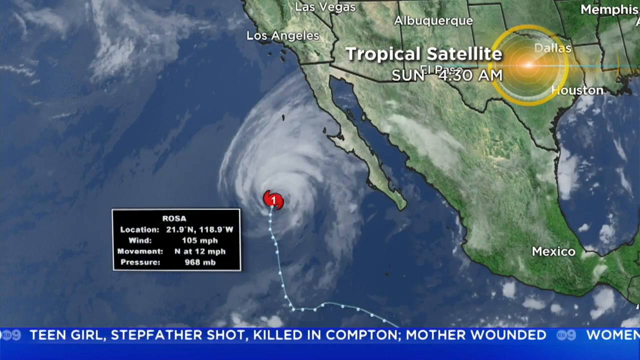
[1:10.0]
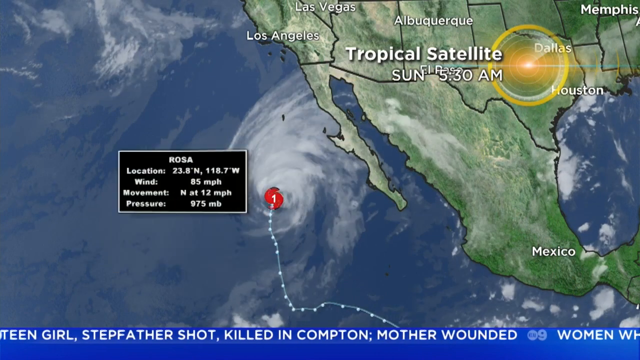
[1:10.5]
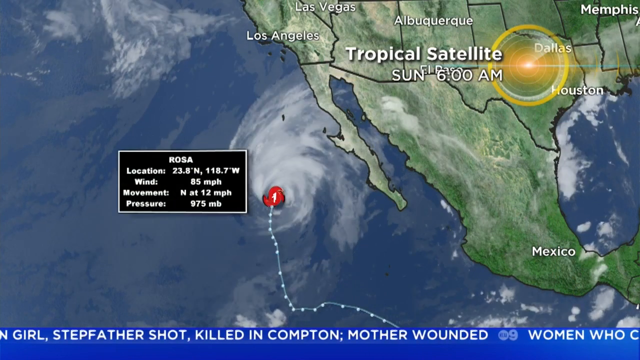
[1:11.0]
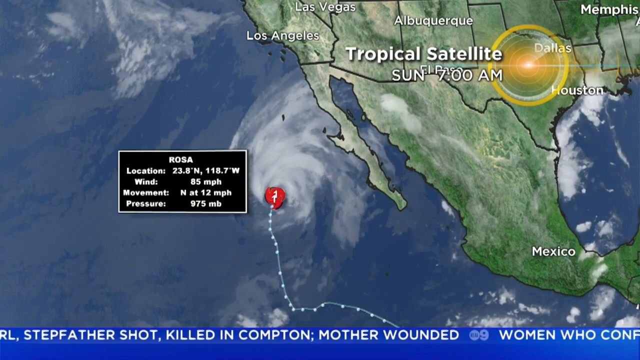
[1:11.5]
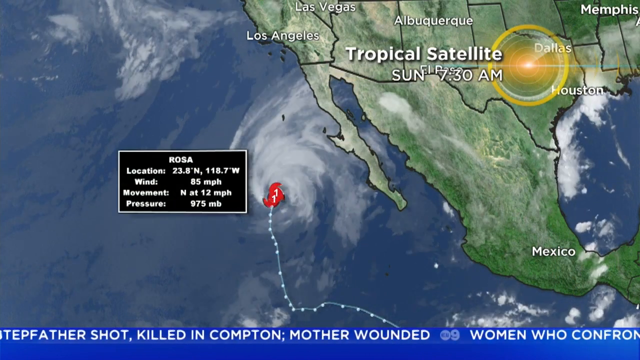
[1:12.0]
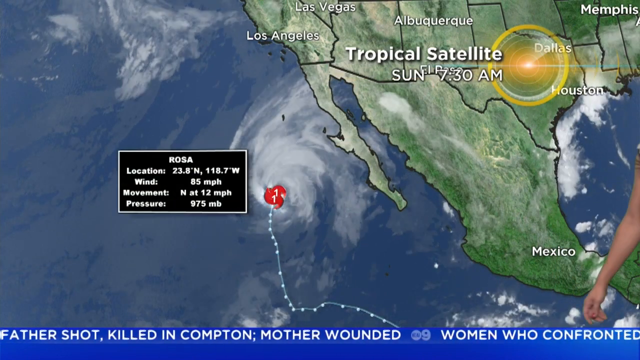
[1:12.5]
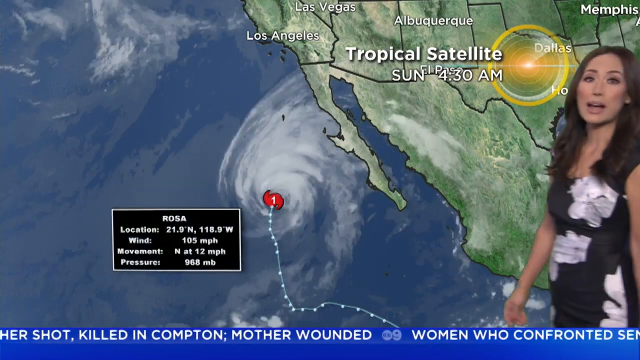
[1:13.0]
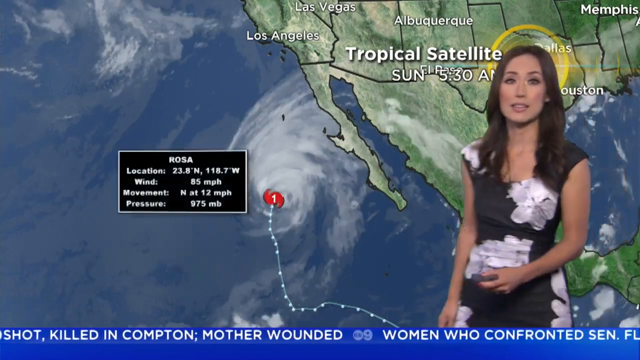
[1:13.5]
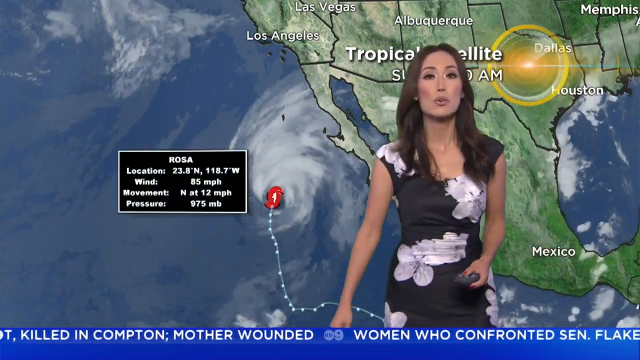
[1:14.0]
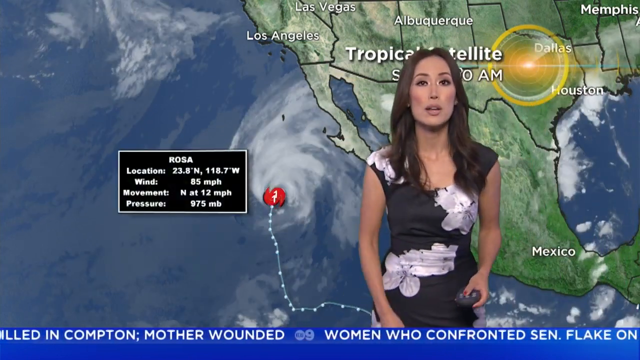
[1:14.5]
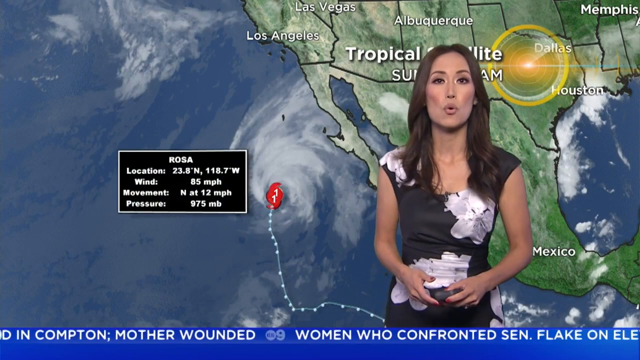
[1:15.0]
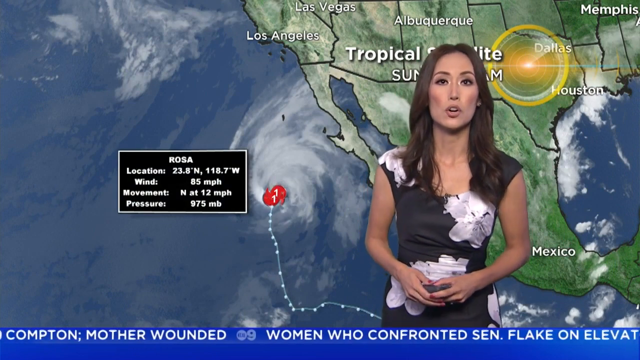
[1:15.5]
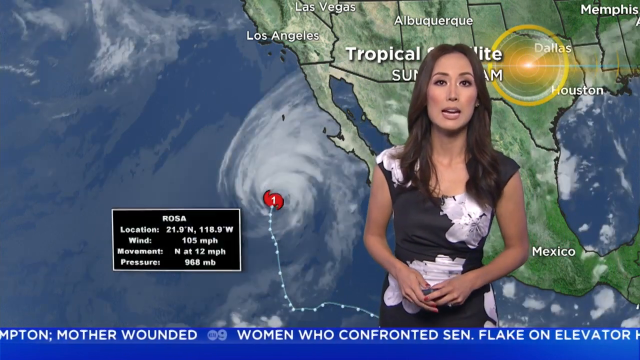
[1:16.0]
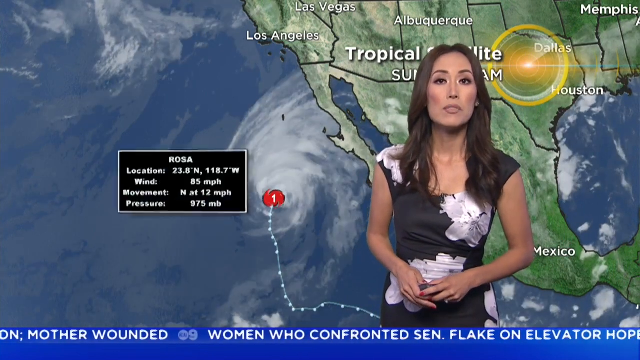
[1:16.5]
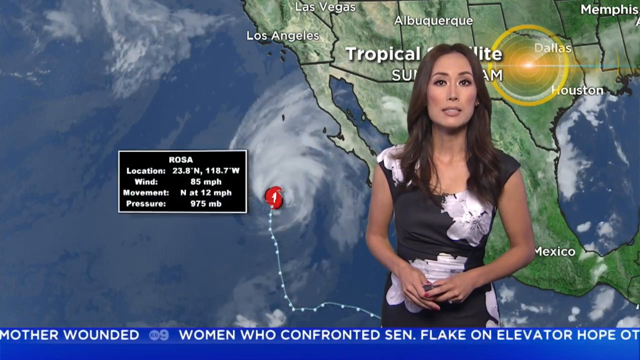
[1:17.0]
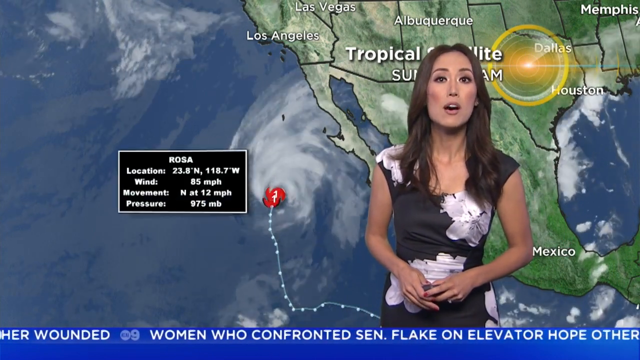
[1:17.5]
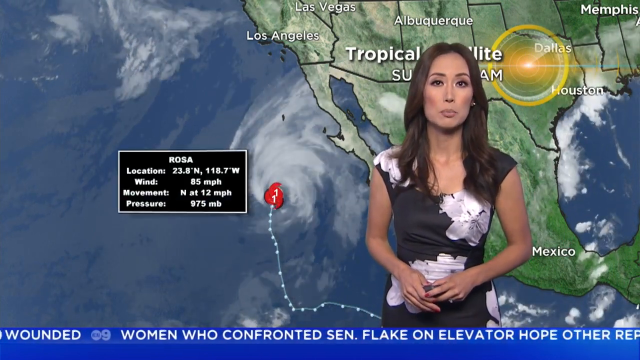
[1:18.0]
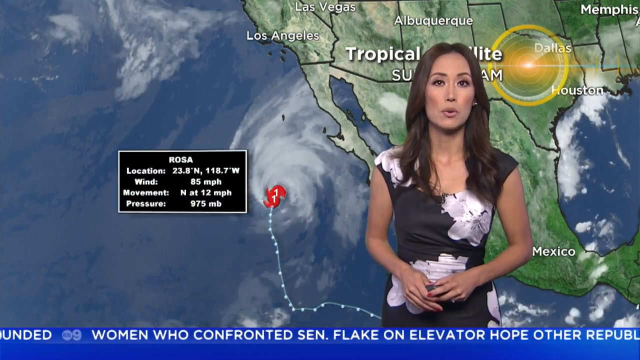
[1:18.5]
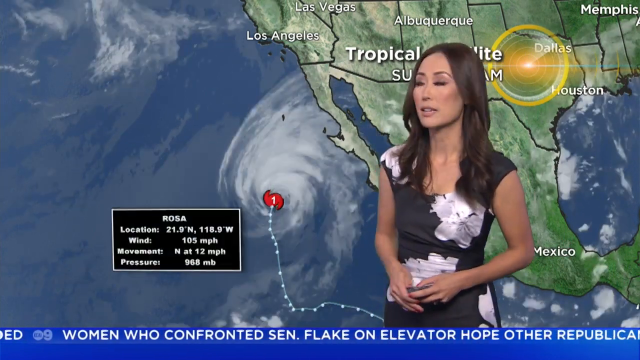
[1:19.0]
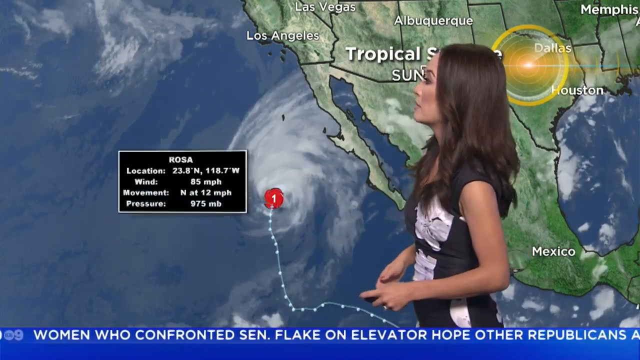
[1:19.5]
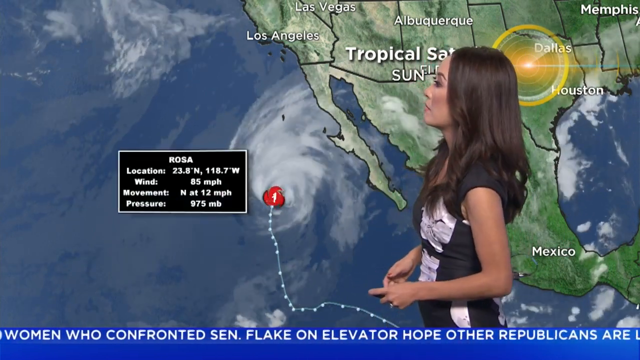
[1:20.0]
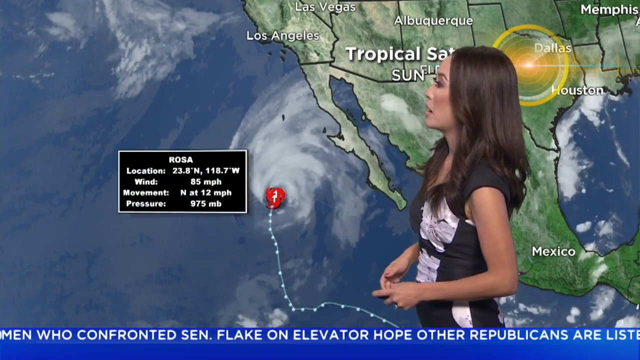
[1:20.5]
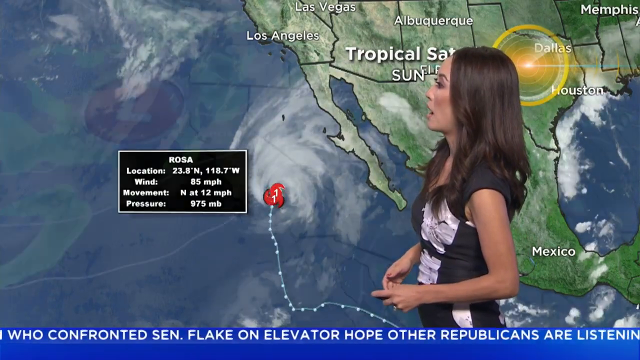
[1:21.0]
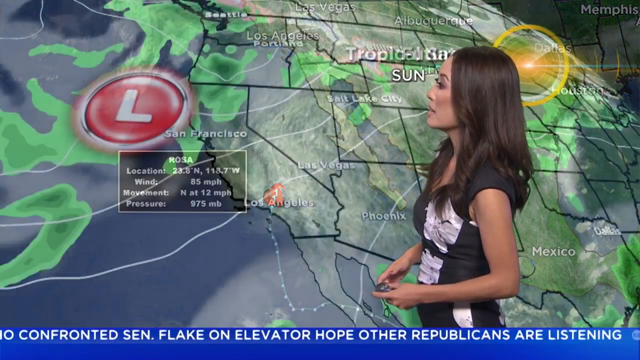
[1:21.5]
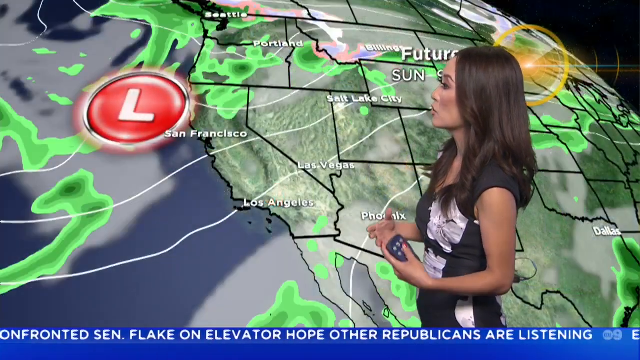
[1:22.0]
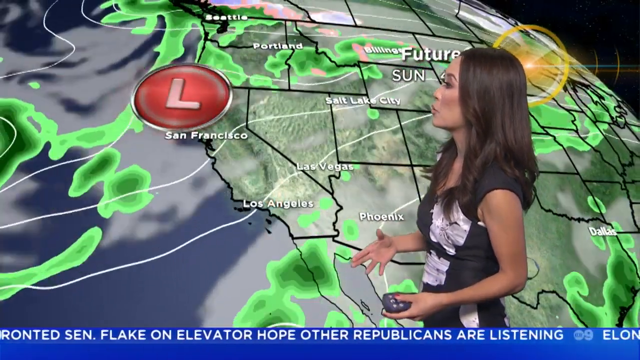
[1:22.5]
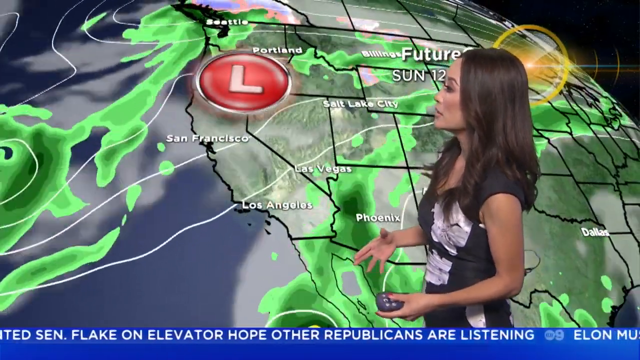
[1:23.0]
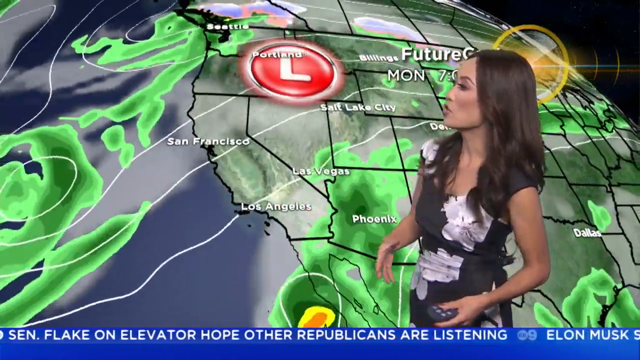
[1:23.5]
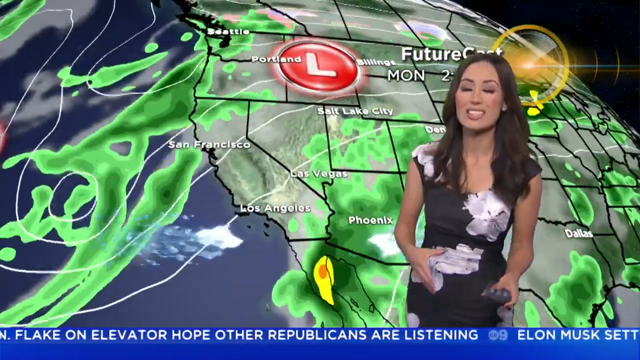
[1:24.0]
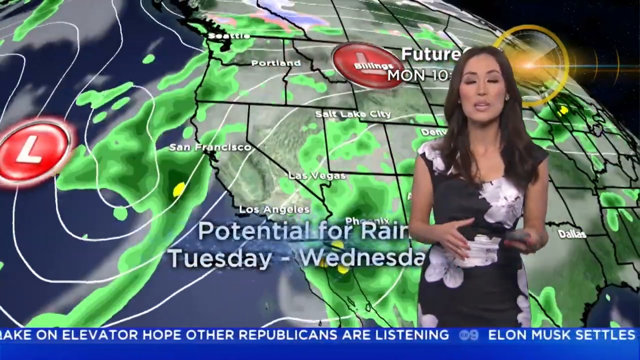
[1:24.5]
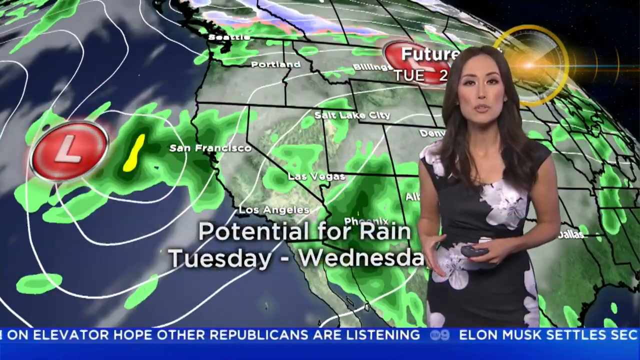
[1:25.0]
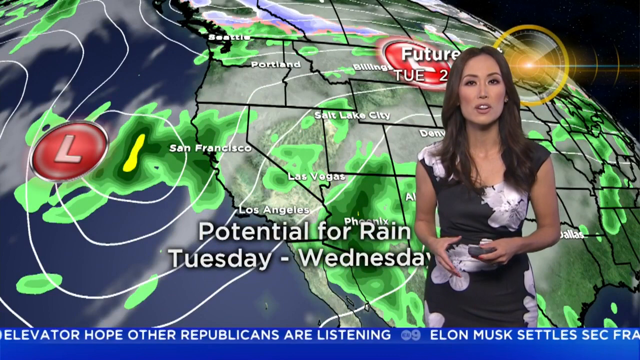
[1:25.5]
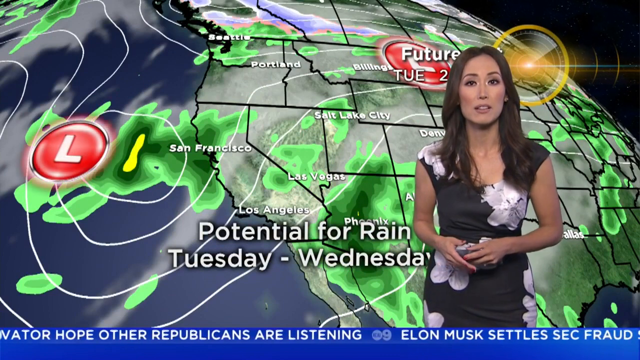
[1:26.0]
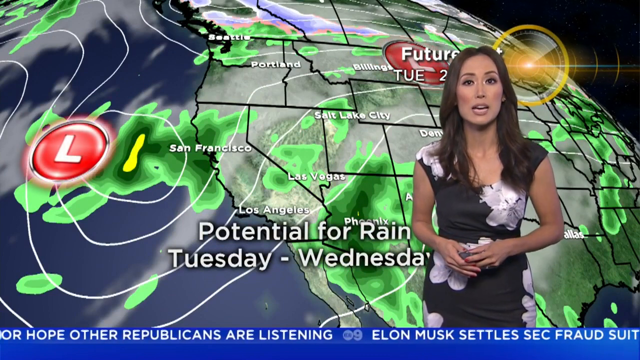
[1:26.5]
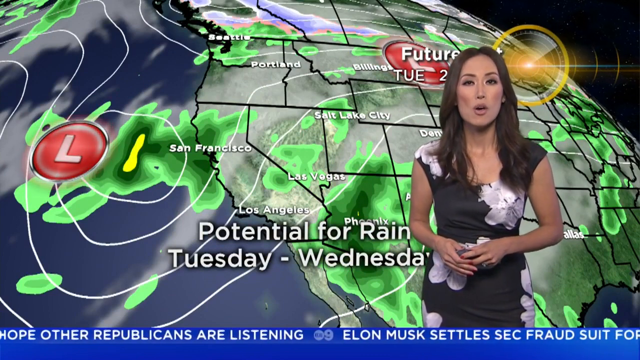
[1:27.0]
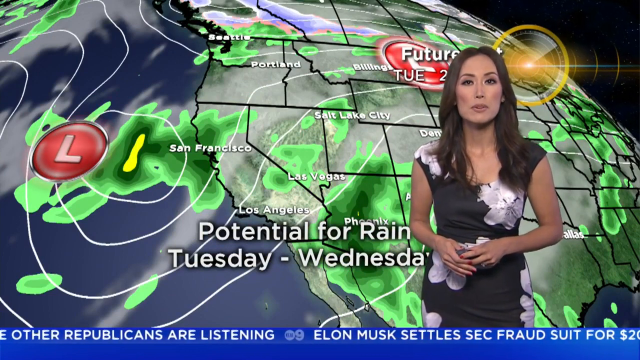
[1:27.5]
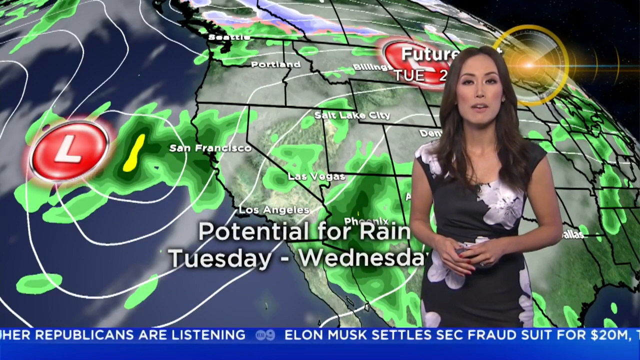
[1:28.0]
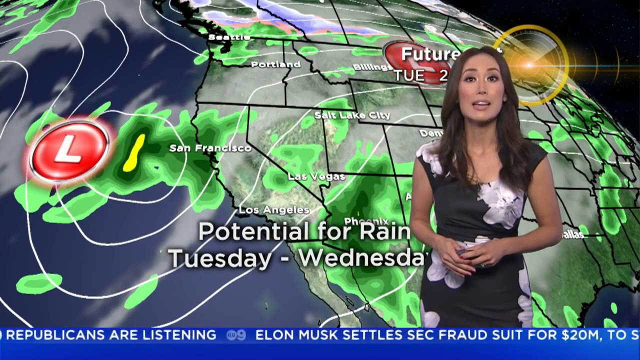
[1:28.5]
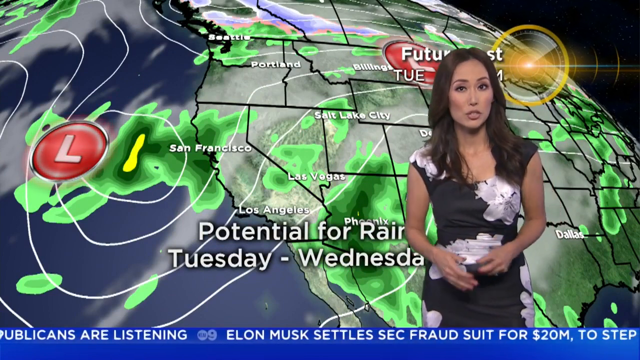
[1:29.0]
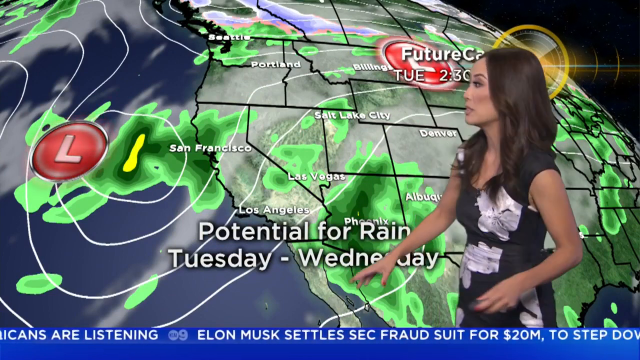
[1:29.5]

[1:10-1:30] The tropical storm or hurricane Rosa is tracked near California: it starts at 105 miles per hour on Sunday at 4:30 and then goes to 85 miles per hour at 6:30 a.m. A "1" appears on it, possibly indicating category one. The weather lady wears a black and white dress with white flowers on it and has long brown hair; she looks possibly of Asian descent.